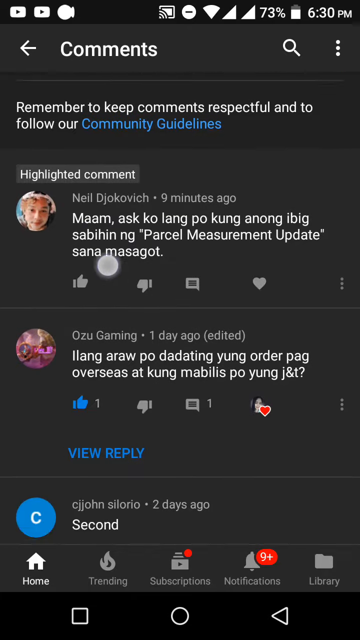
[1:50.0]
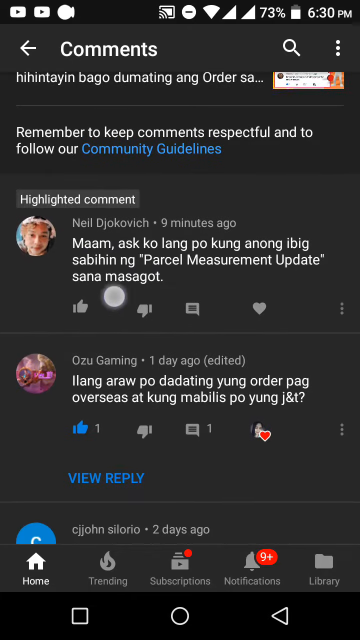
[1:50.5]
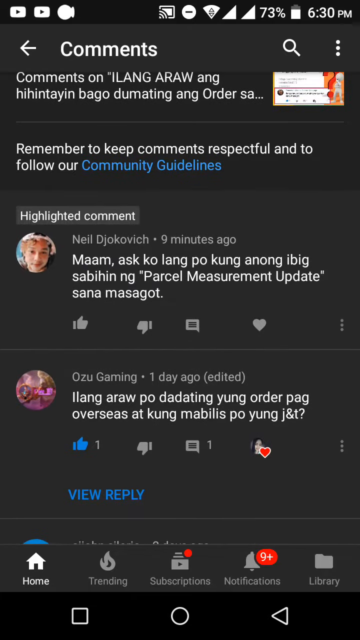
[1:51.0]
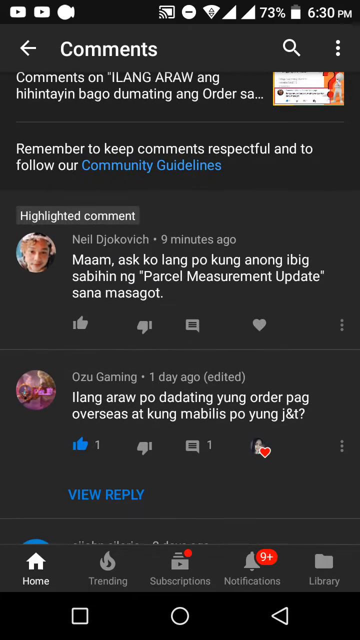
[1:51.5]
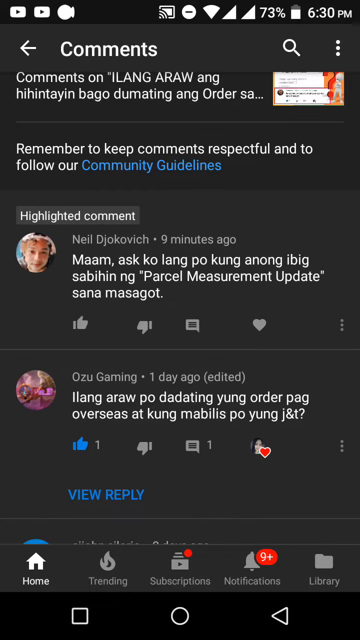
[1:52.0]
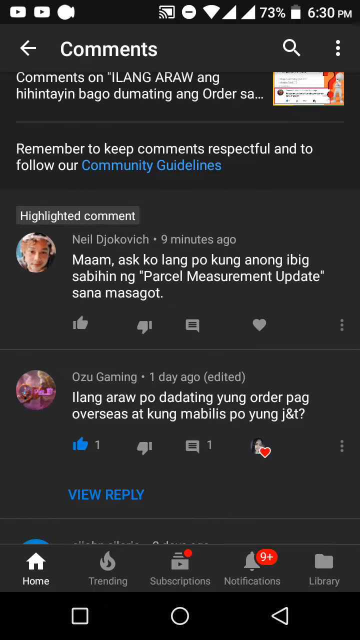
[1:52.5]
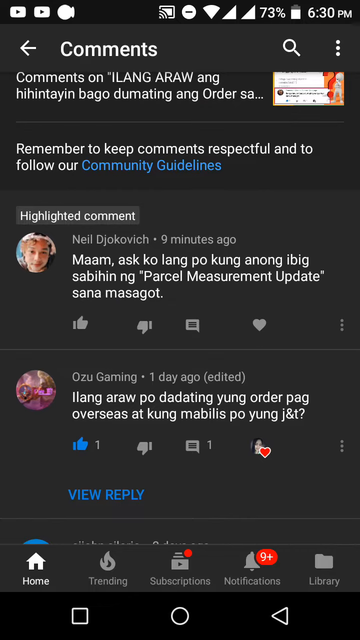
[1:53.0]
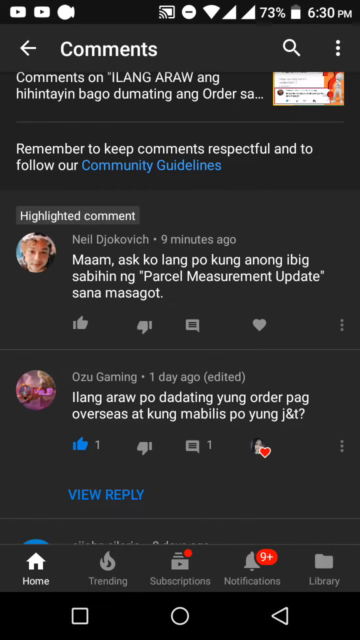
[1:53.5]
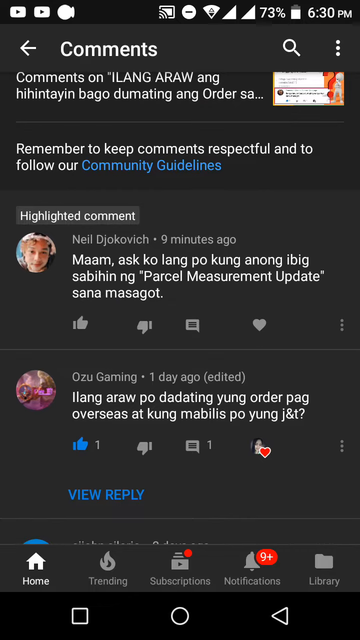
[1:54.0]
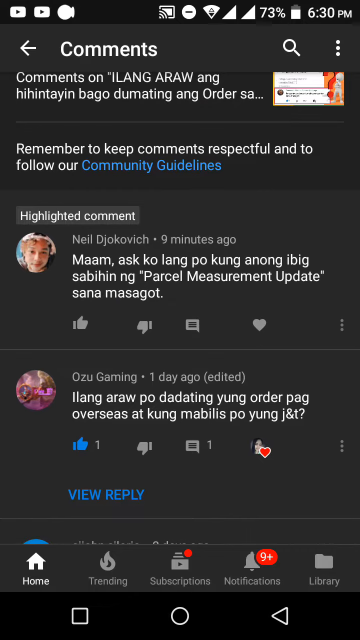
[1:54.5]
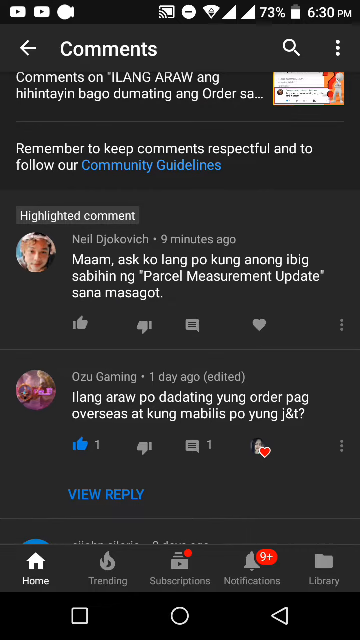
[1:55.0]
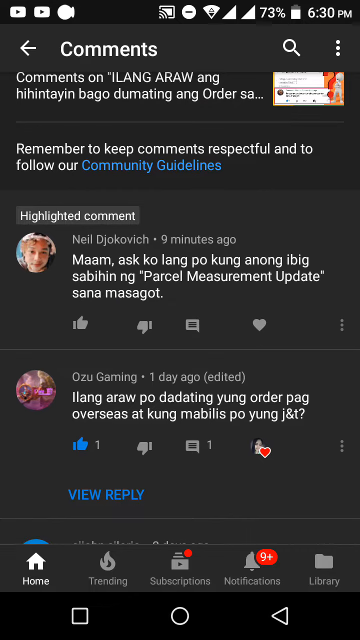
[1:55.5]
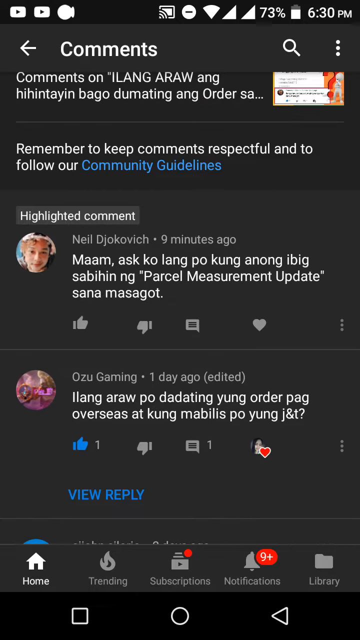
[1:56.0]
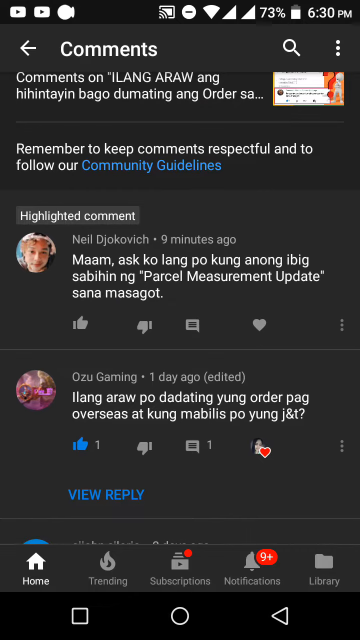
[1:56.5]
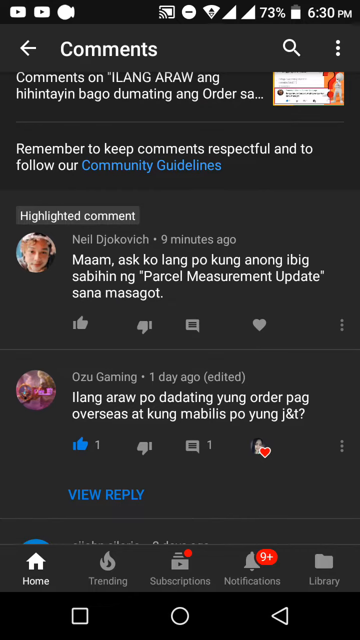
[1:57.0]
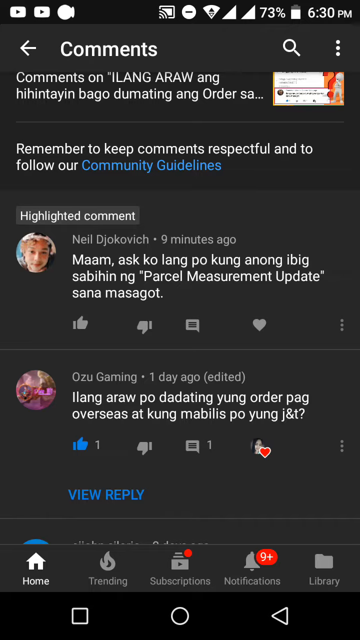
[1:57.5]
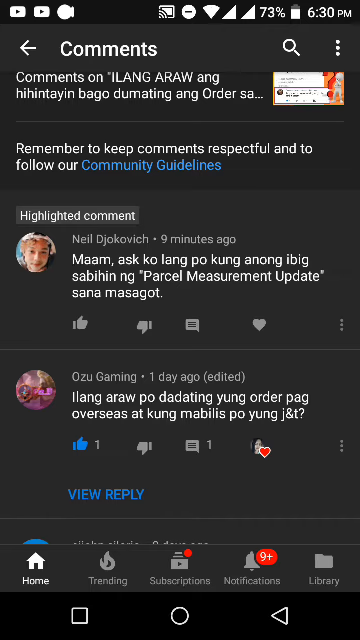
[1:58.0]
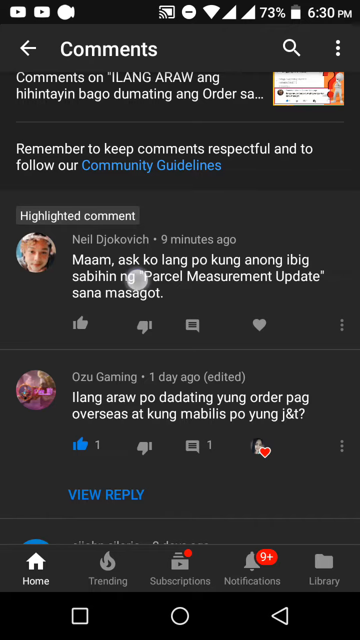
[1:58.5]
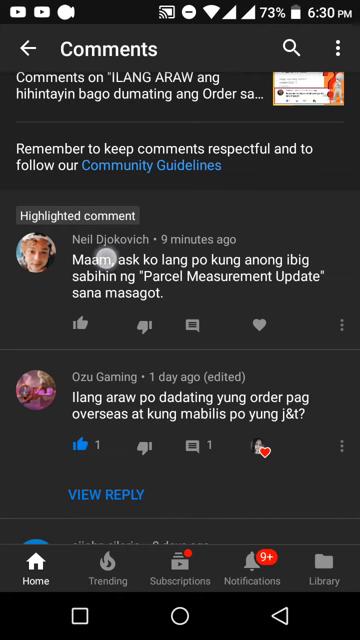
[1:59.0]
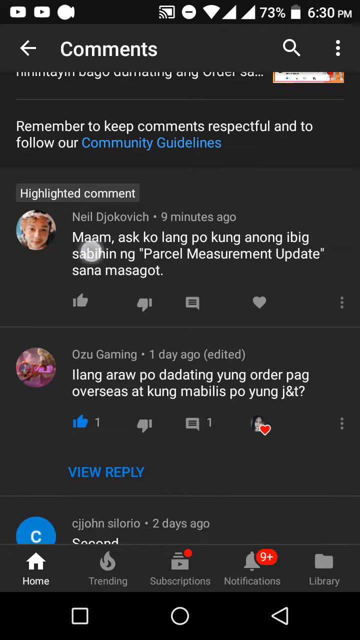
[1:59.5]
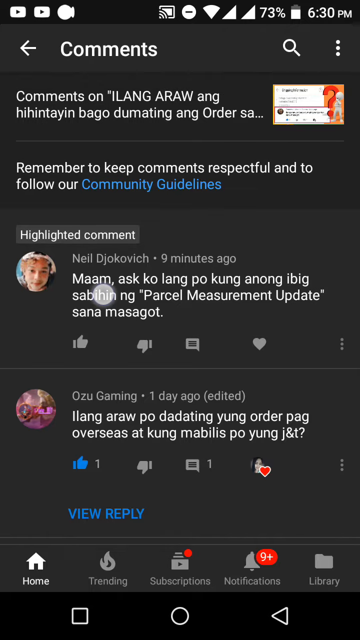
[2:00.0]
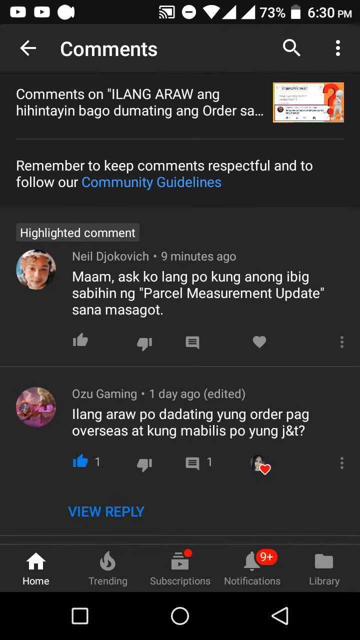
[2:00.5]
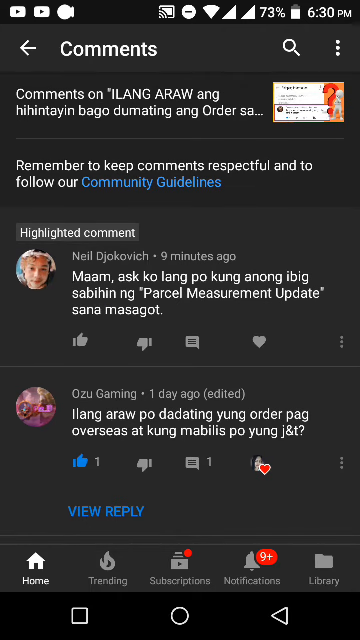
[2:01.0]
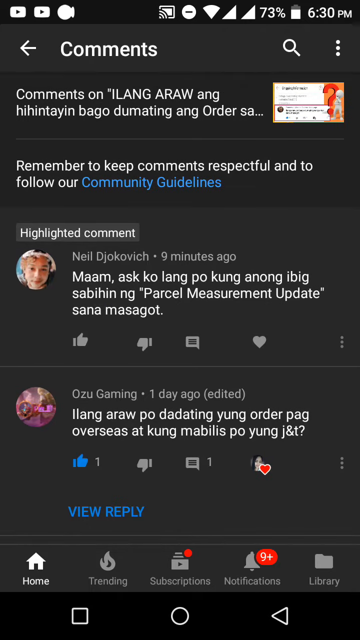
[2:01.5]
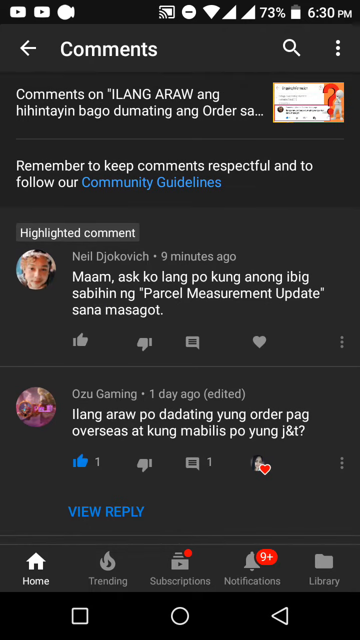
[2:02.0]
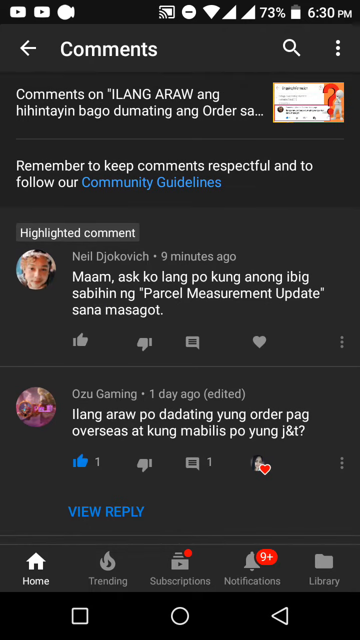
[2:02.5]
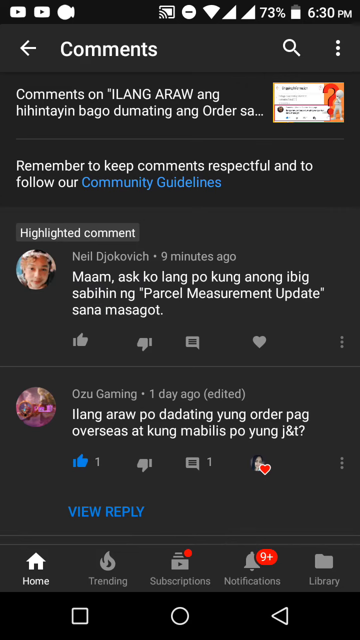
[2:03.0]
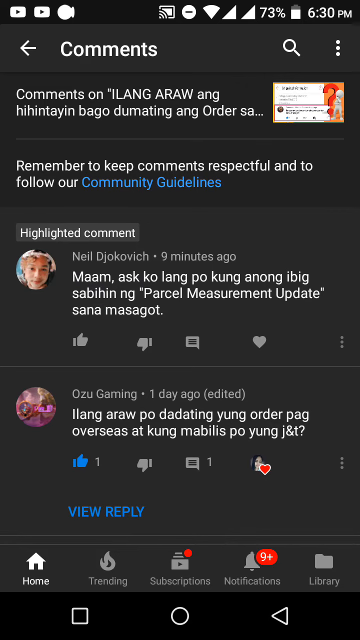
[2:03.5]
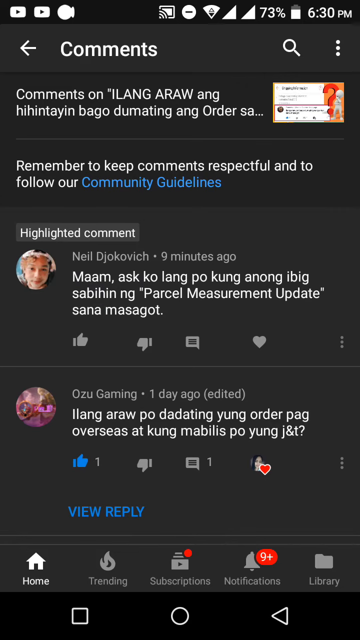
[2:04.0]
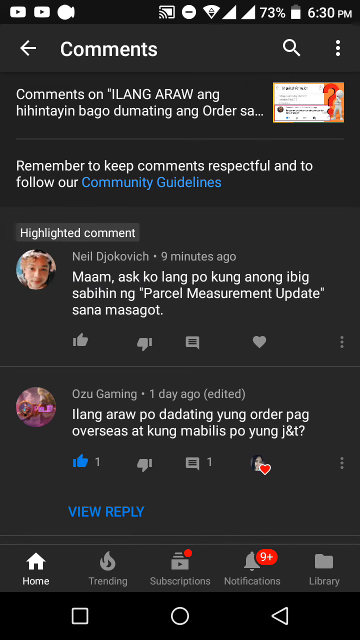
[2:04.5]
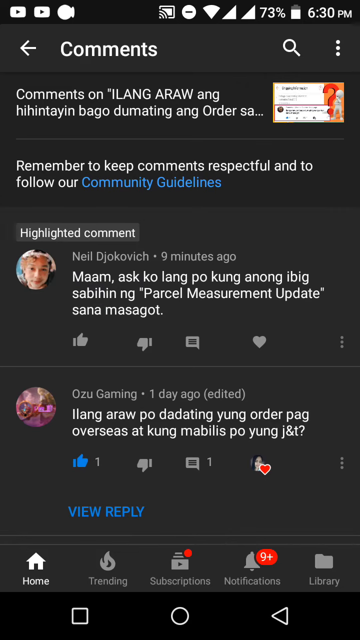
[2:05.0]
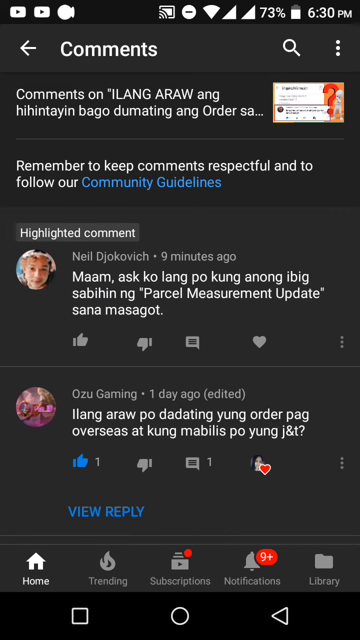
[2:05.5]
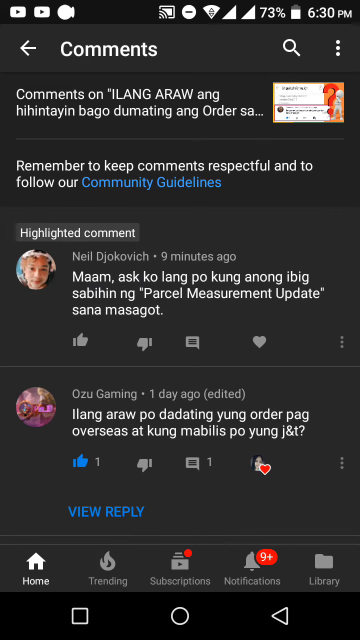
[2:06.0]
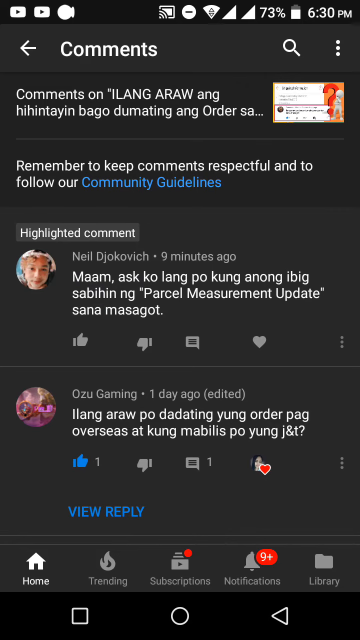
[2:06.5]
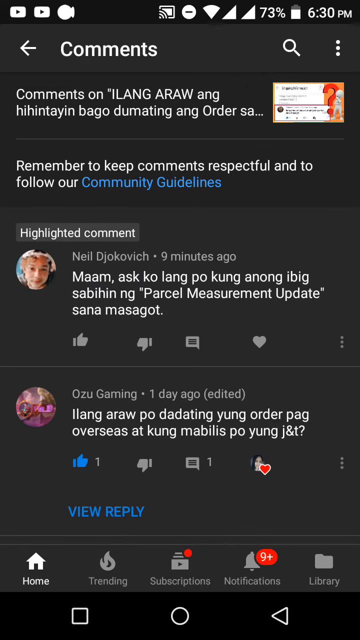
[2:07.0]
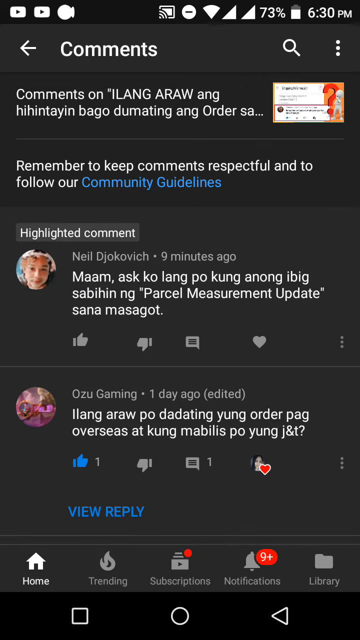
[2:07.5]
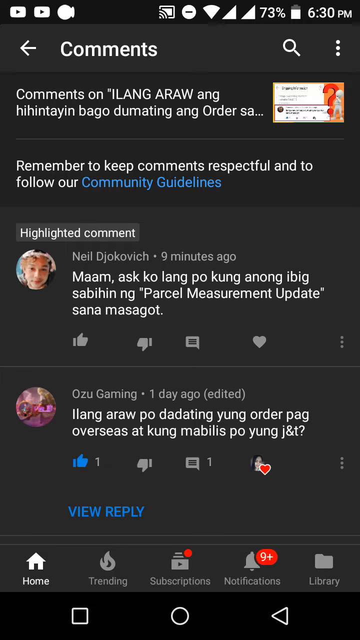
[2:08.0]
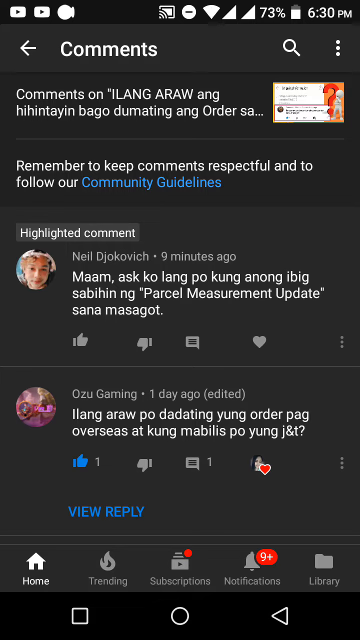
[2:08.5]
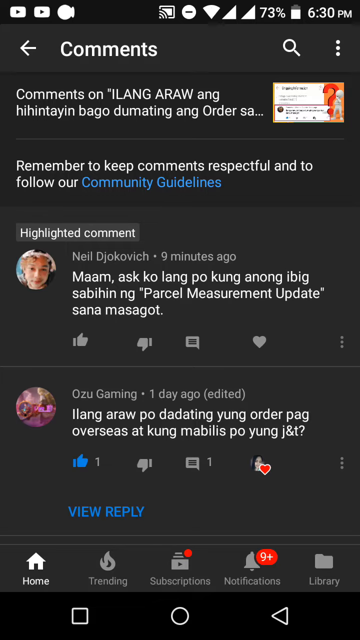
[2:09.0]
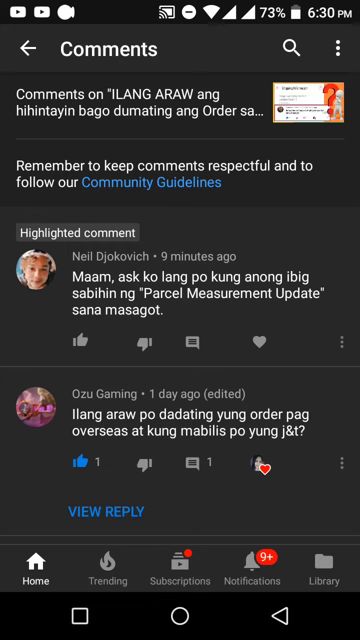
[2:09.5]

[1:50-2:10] A mobile device screen shows the comments page of a social media application, with a background that is a combination of black and gray. All the text is white except for a few words. Two YouTube icons are in the upper left corner. Across the bottom are five icons: home, trending, subscriptions, notifications, and library. A red circle over the bell icon shows nine plus notifications. The page has two comments: the top one is a highlighted comment by a person named Neil Djokovic, and the second is by Ozu Gaming. Both are written in a foreign language that is not English. Above the comments, written in English, it says "remember to keep comments respectful and to follow our community guidelines."